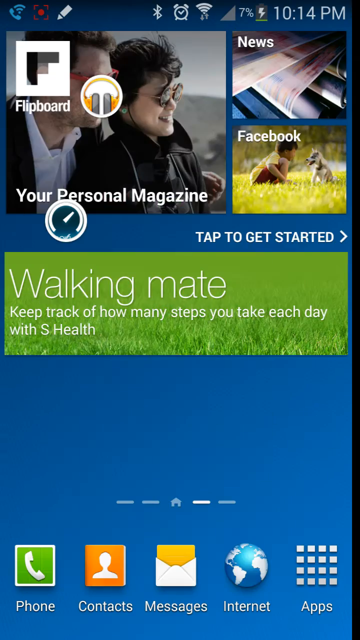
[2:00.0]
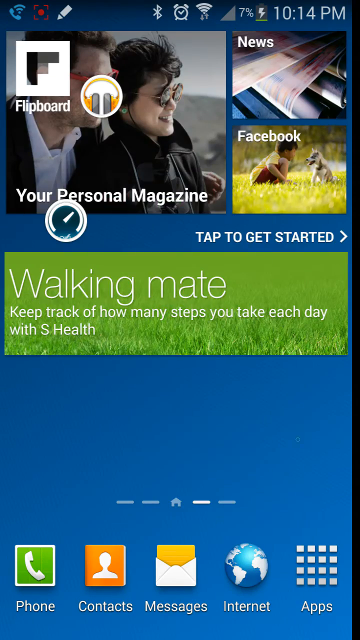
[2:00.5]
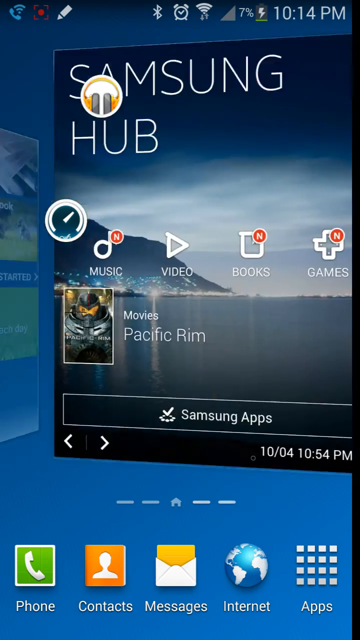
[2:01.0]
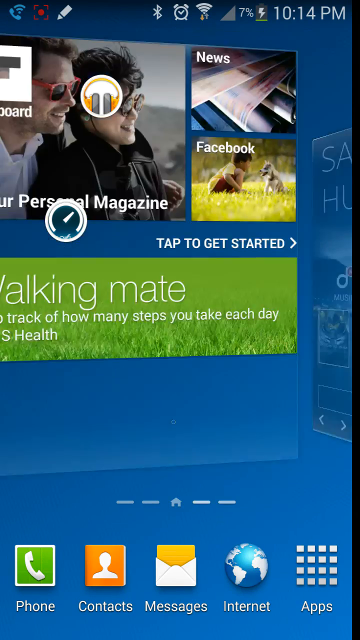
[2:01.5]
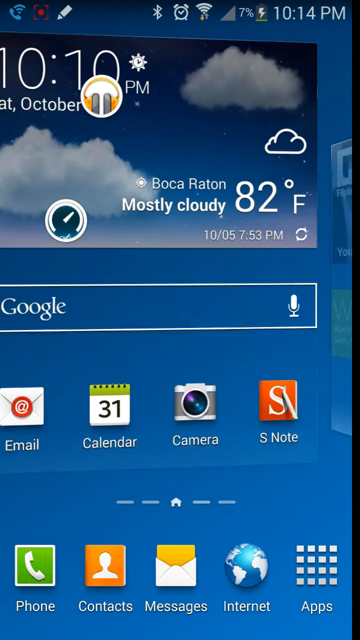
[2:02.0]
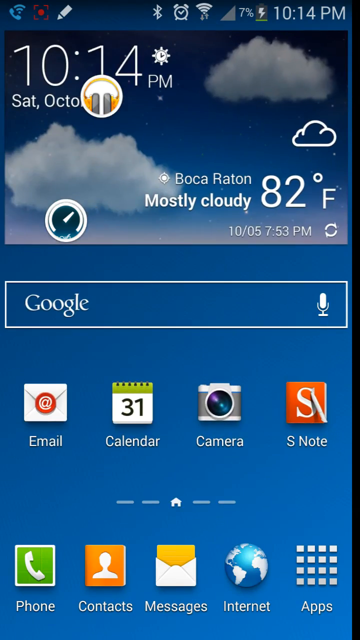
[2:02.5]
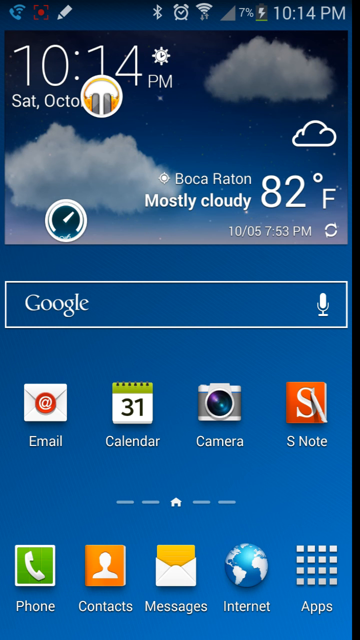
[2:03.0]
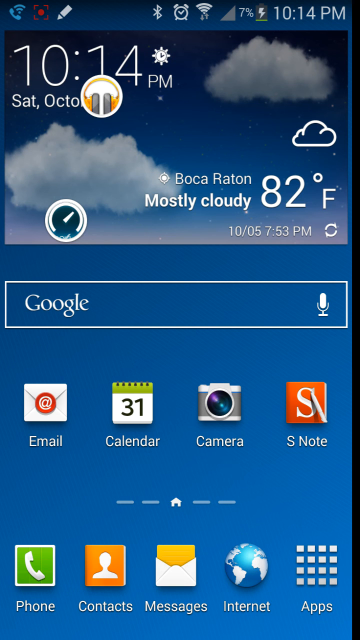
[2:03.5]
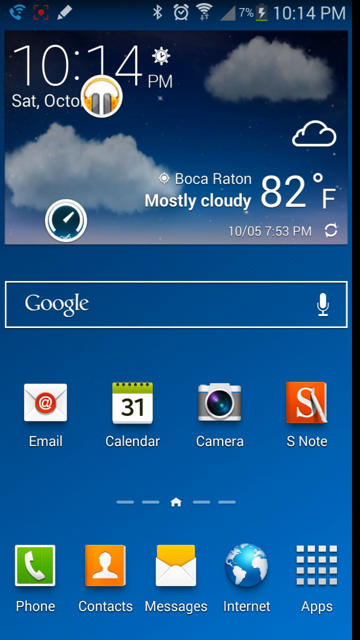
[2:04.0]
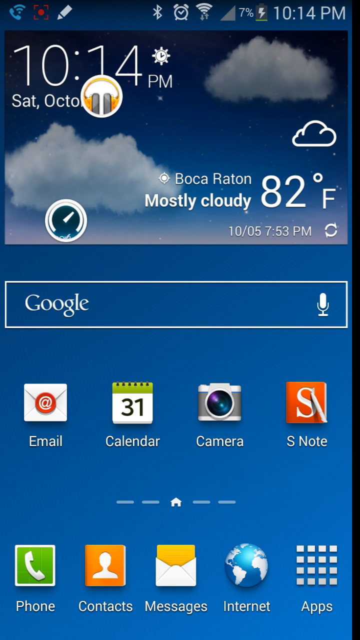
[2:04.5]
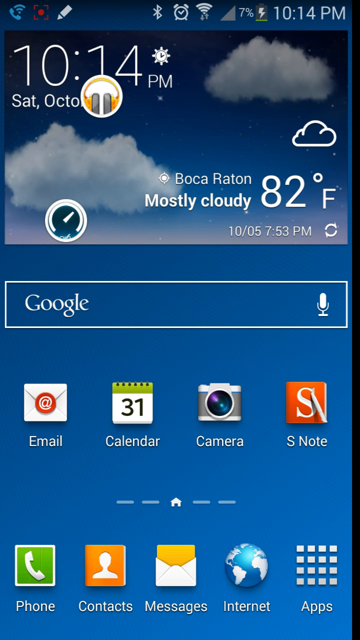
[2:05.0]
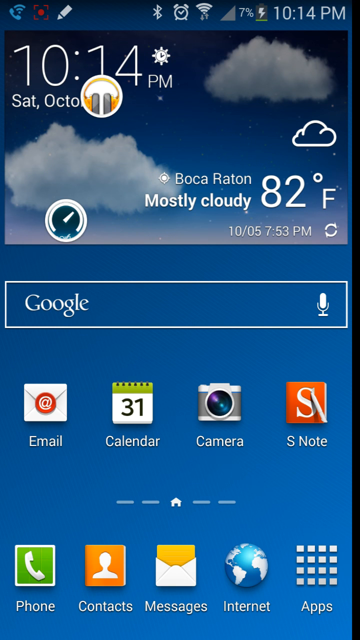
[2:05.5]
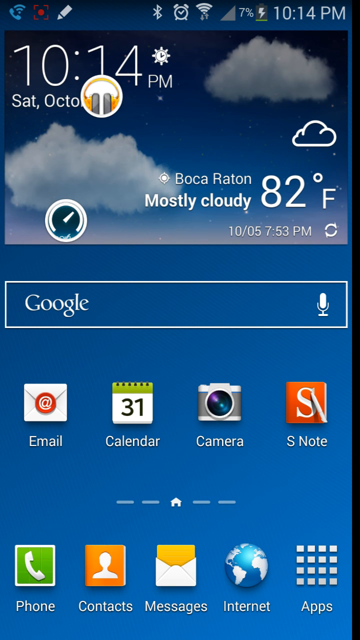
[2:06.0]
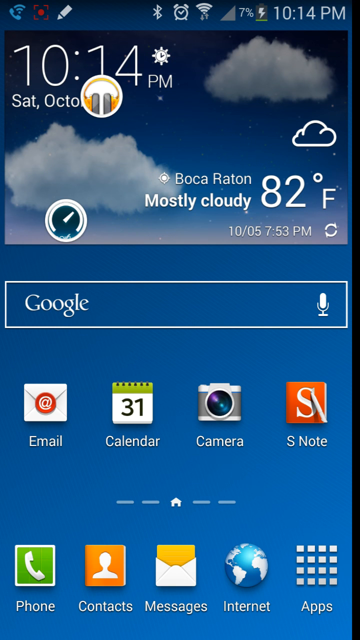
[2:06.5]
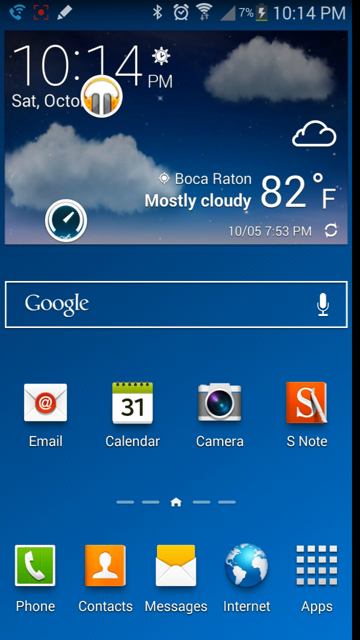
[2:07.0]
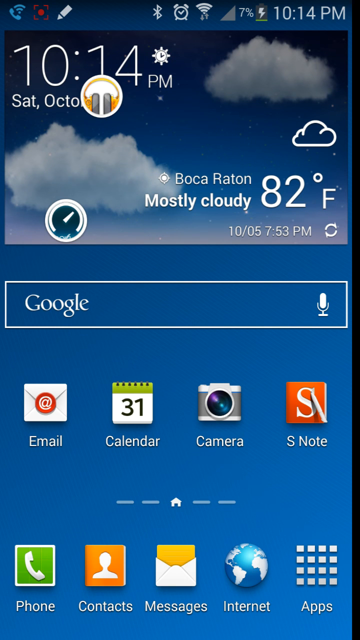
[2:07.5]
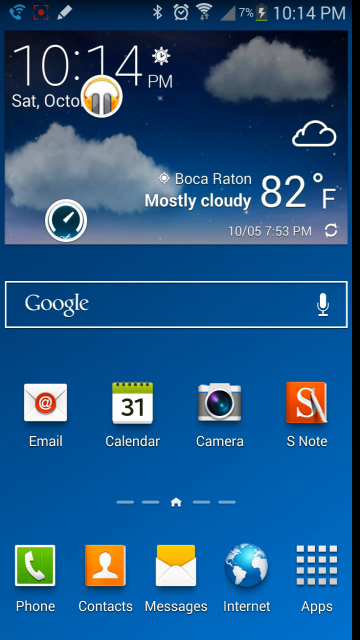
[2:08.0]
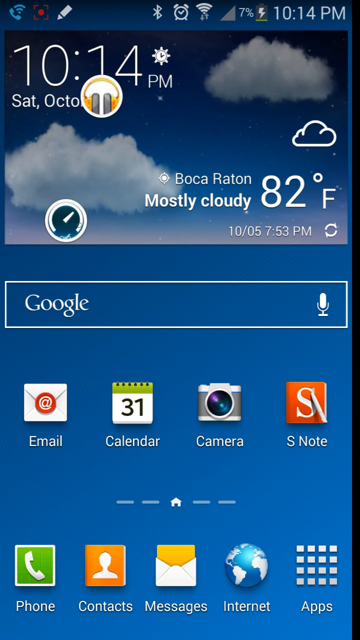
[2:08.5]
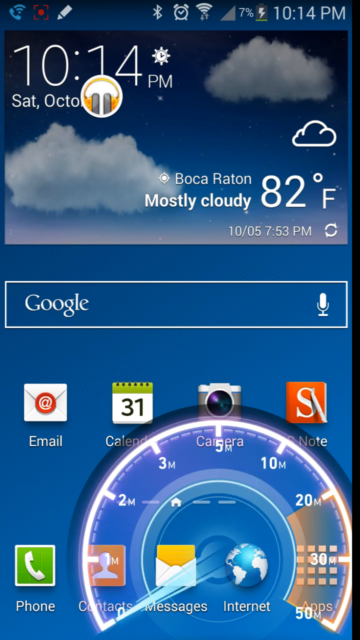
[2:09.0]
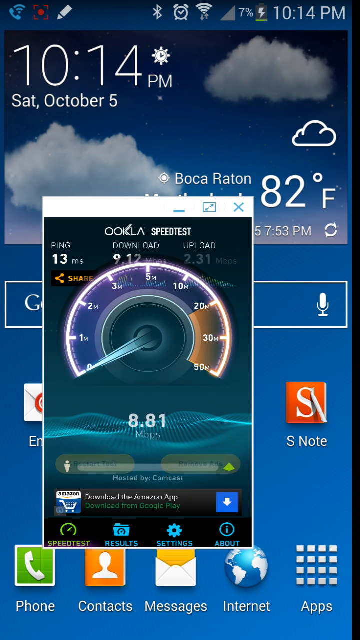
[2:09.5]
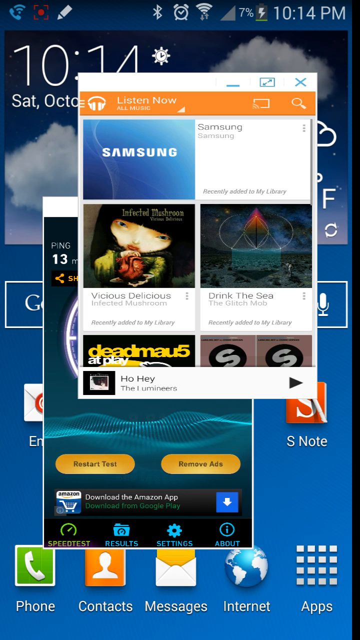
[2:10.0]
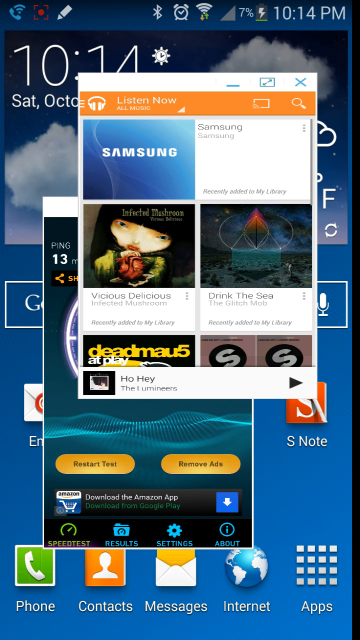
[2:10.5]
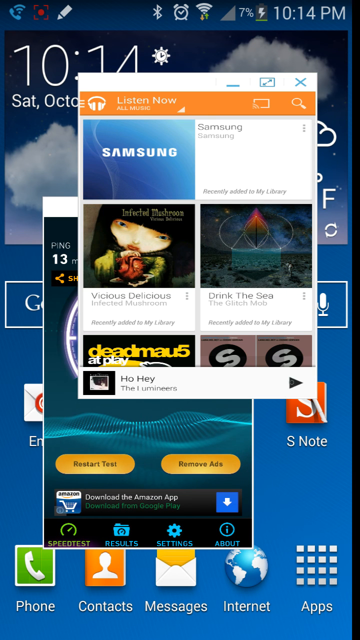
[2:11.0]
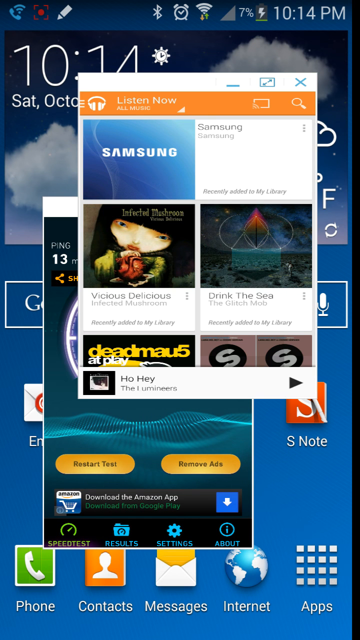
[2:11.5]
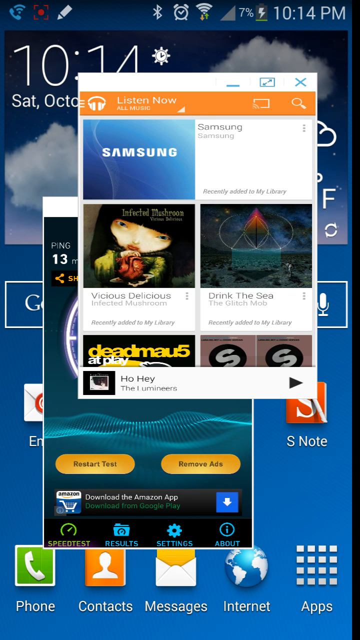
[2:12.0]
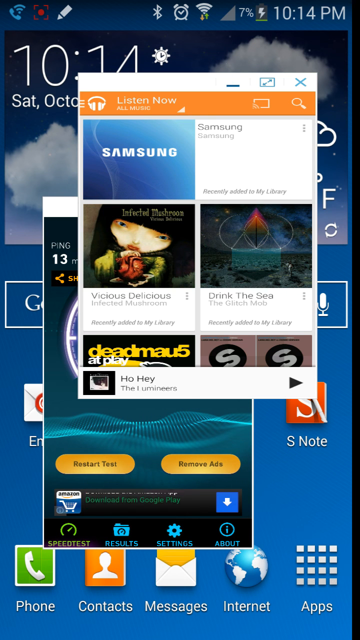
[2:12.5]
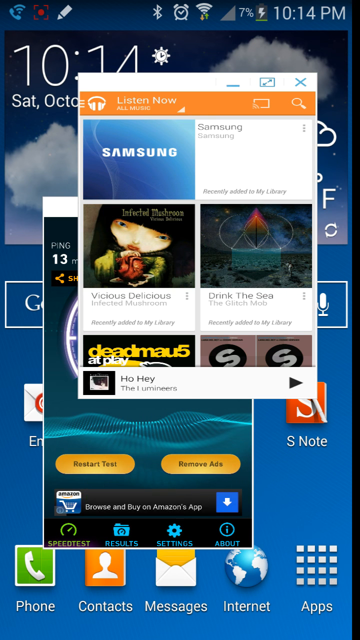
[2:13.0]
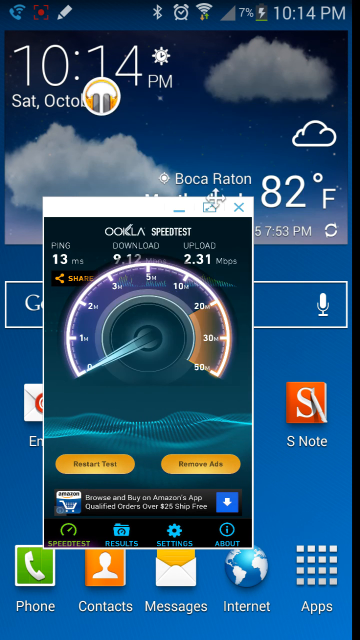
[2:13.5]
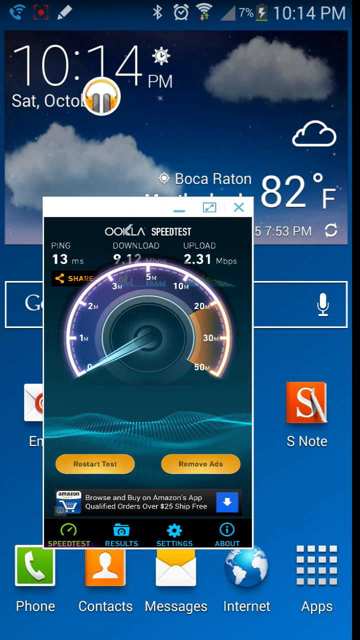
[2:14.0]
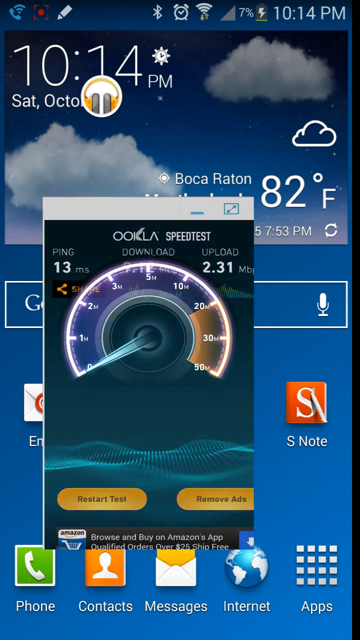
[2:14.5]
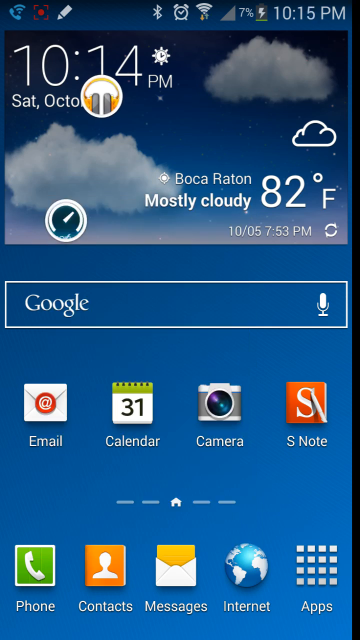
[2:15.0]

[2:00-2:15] The user switches pages on the Android phone's home screen to one showing the date, time and weather: 82 degrees Fahrenheit, 10:14 pm, Saturday, October 5, cloudy. This page also has the email app, the calendar, the camera and an app called S Note. The user then reopens the background apps: Listen Now, where the music is on, and the Ookla speed test, which has finished running and shows a ping of 13 milliseconds, a download speed of 9 megabytes per second and an upload speed of 2 megabytes per second.